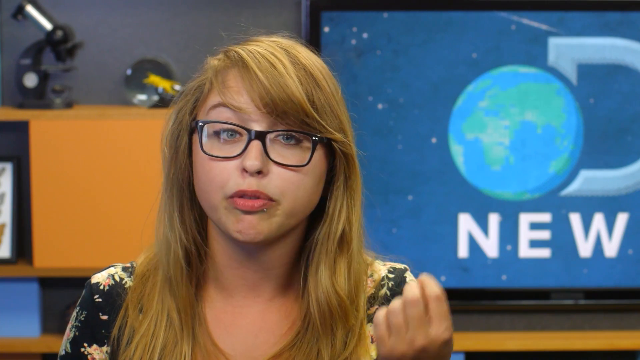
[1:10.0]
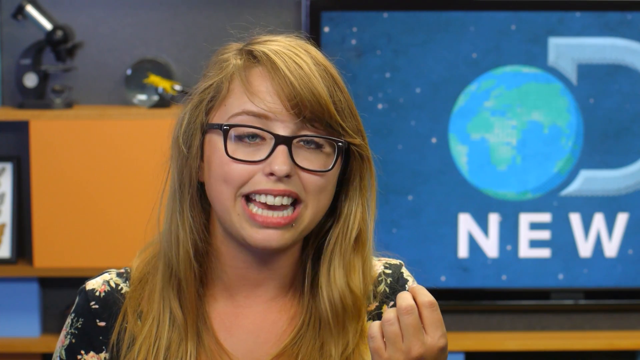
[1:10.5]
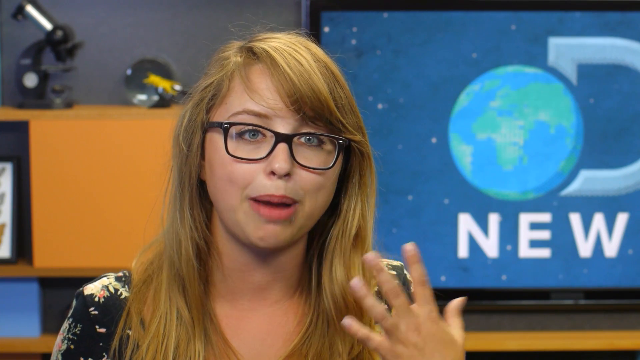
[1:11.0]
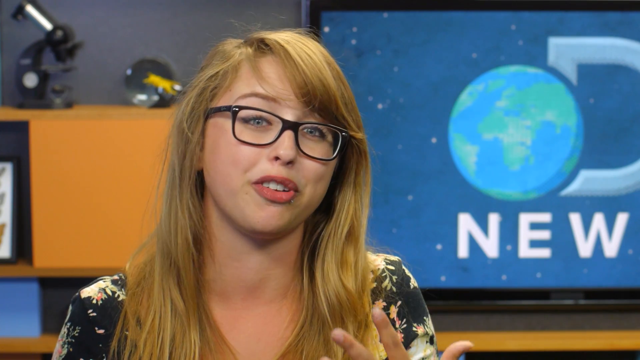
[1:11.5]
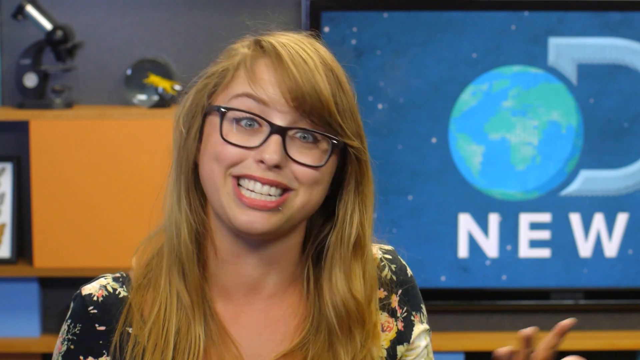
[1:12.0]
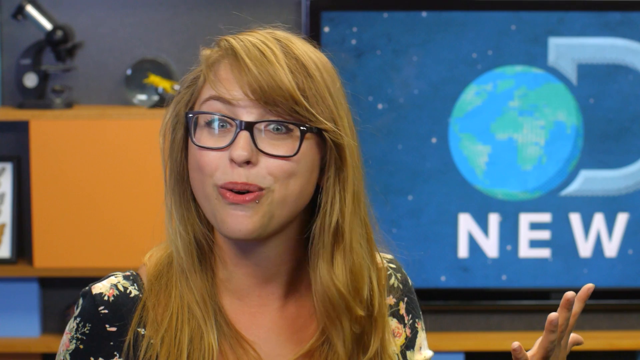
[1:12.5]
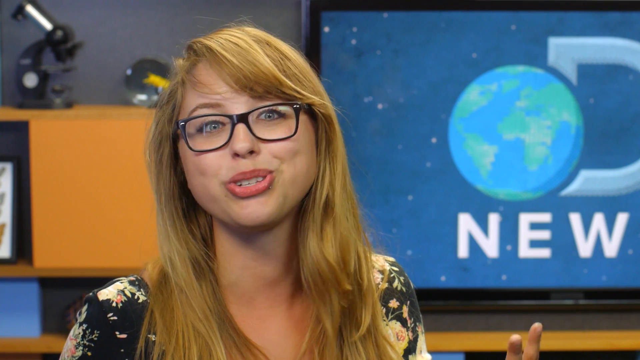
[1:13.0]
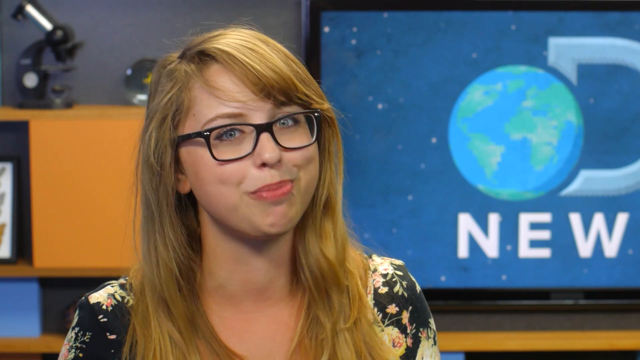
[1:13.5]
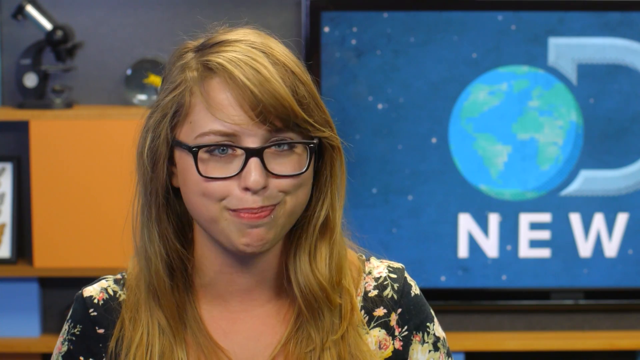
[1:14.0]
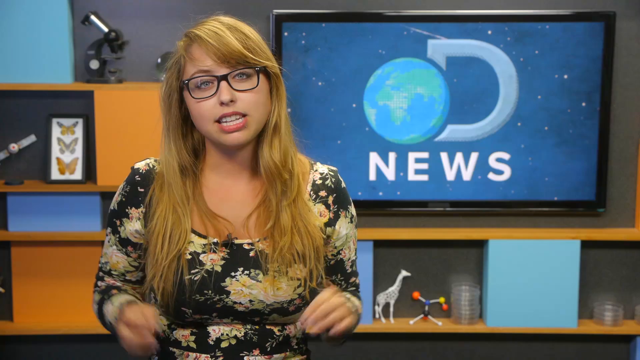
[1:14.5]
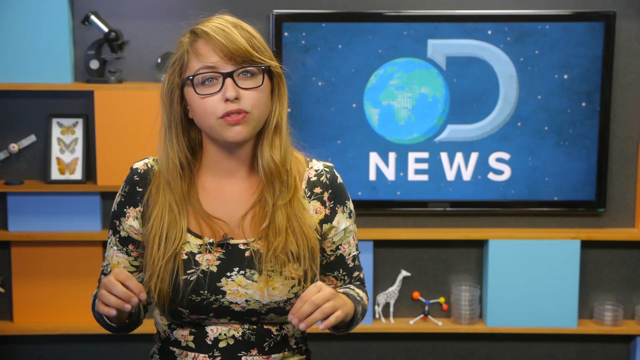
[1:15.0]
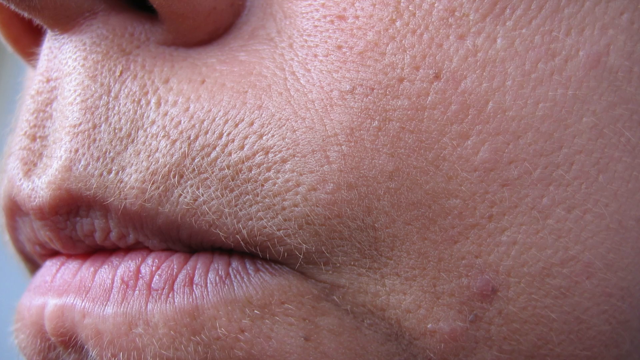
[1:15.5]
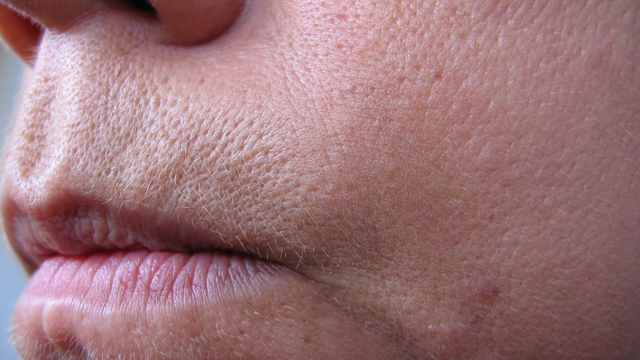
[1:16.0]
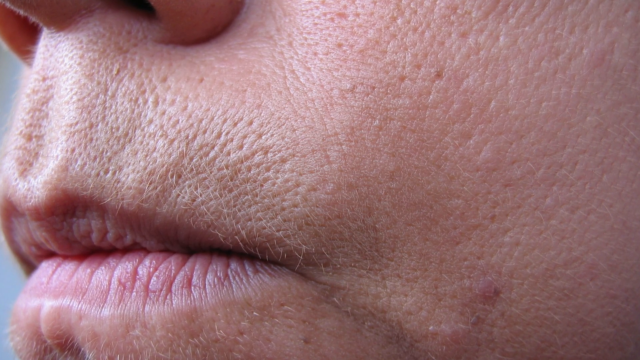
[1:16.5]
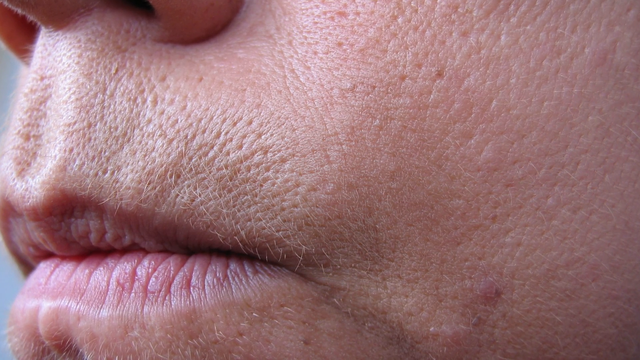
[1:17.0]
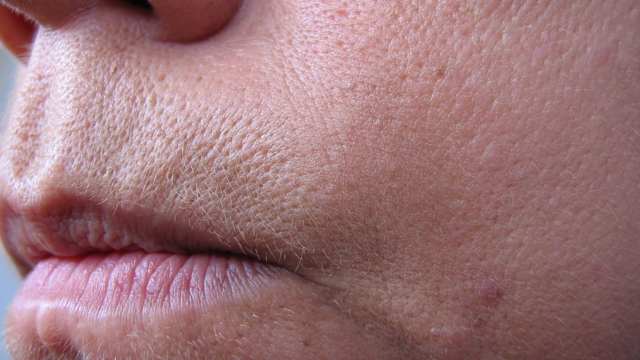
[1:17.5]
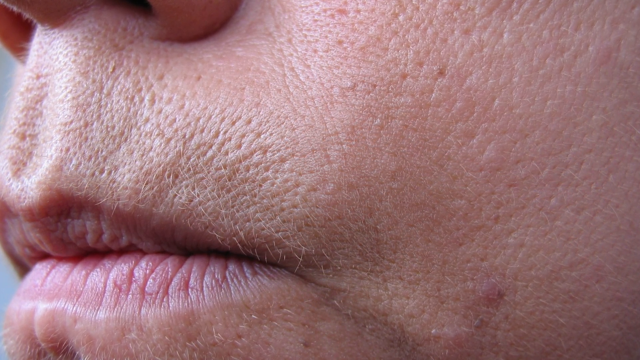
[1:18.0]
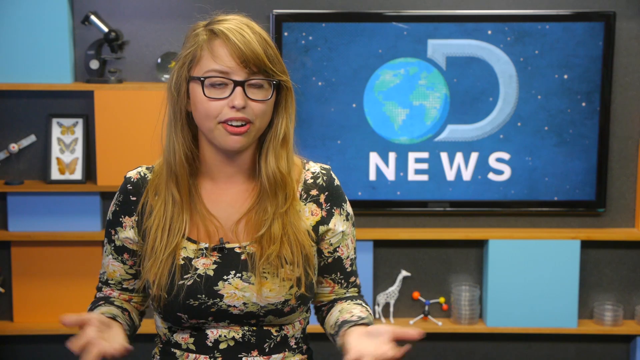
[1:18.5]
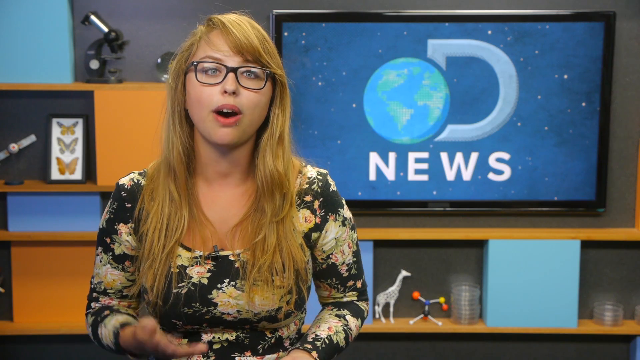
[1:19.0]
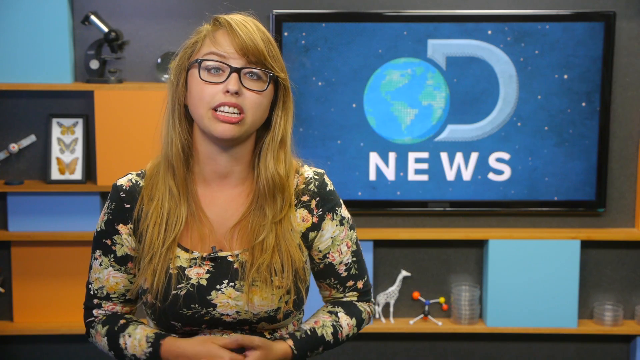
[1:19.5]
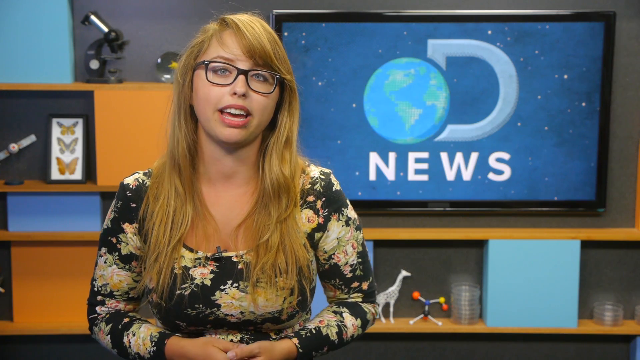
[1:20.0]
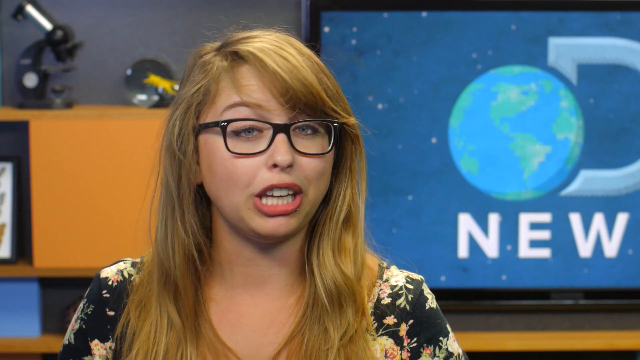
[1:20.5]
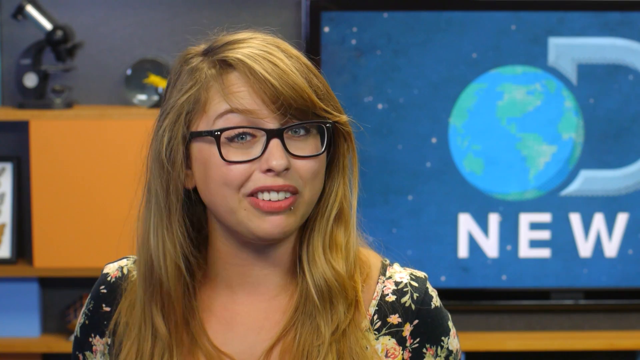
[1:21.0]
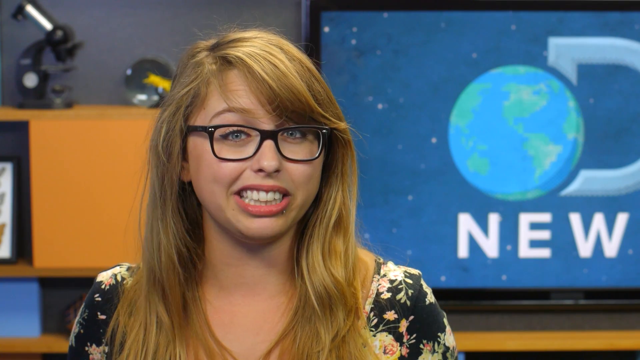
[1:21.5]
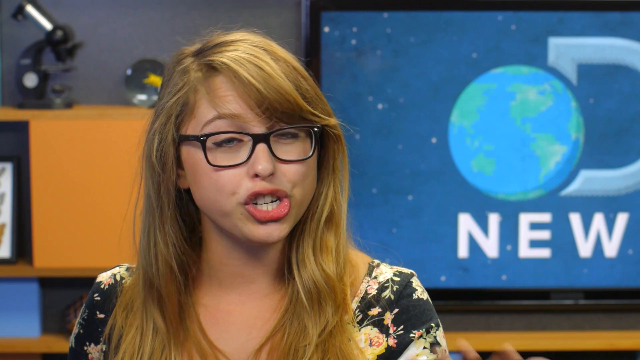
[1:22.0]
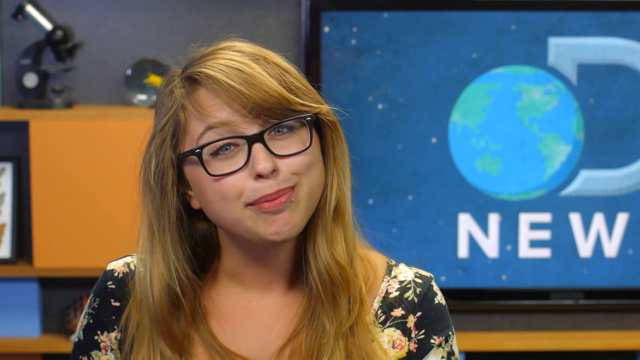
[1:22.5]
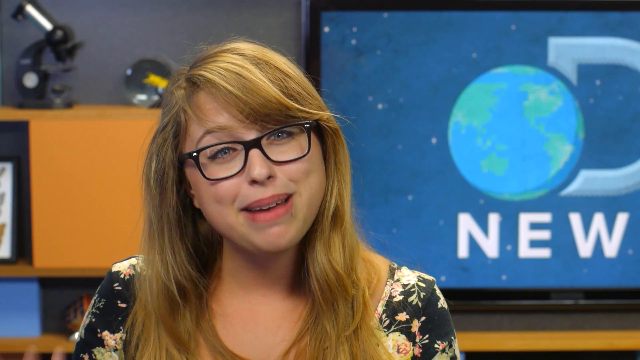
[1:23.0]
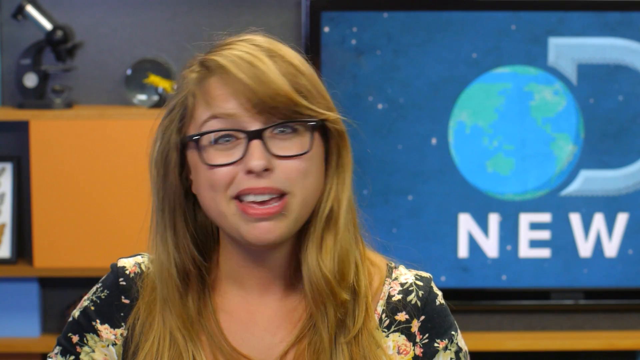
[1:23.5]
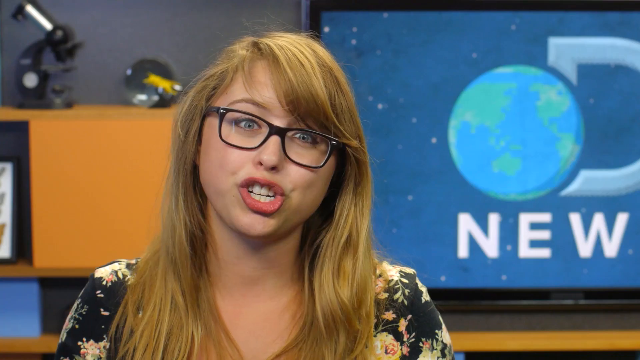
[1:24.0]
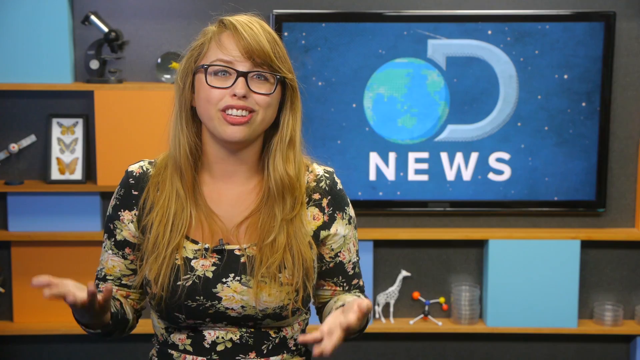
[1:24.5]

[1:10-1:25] Newscaster Laci Green reports with animated gestures, hand movements, eye movement and smiles. The video shifts to a very close-up segment of a person's face showing mainly the mouth, upper lip, lower lip, the bottom of the nose and the nostrils, plus the left cheek; the image is so close that the pores in the skin of the upper lip and face are visible. The person appears to be of European descent. Back in the studio, Laci continues reporting with animated hand gestures. Then the close-up of the person's mouth, nostrils and a portion of the left cheek is shown.